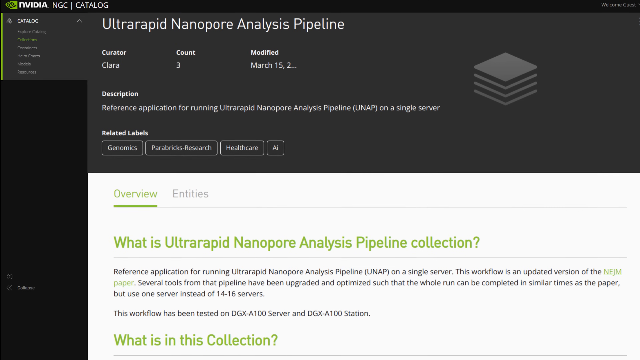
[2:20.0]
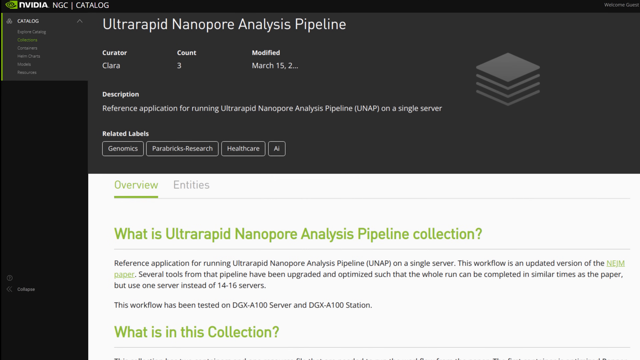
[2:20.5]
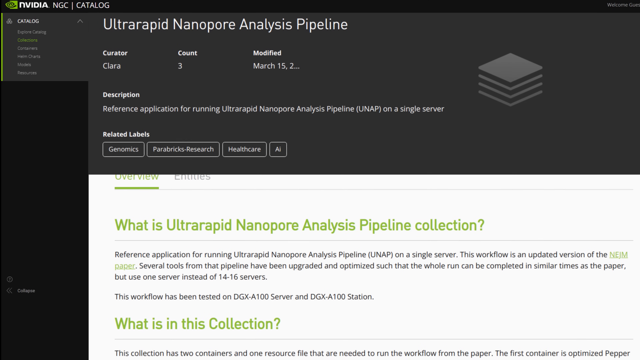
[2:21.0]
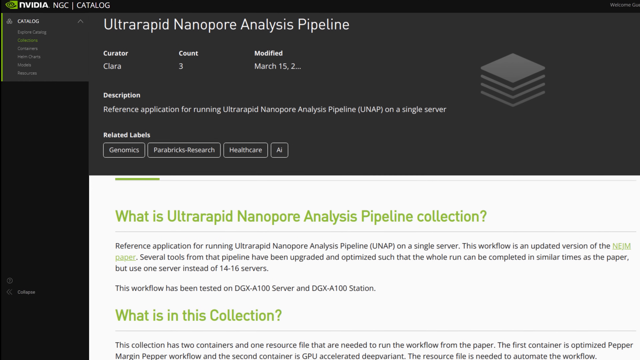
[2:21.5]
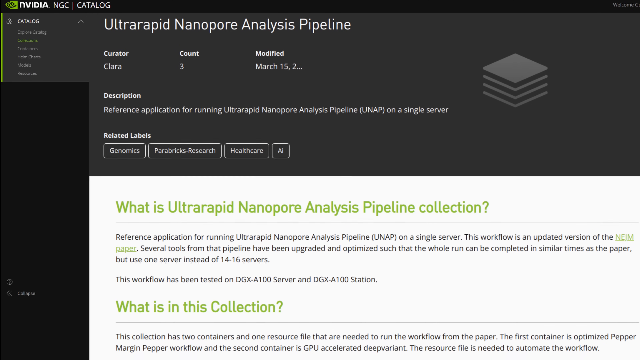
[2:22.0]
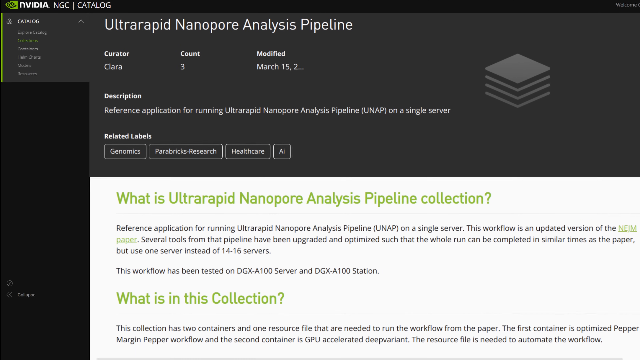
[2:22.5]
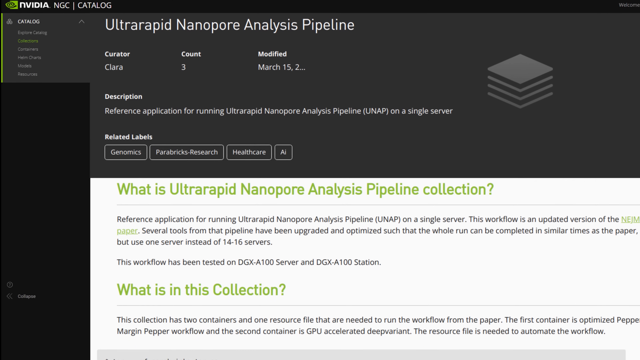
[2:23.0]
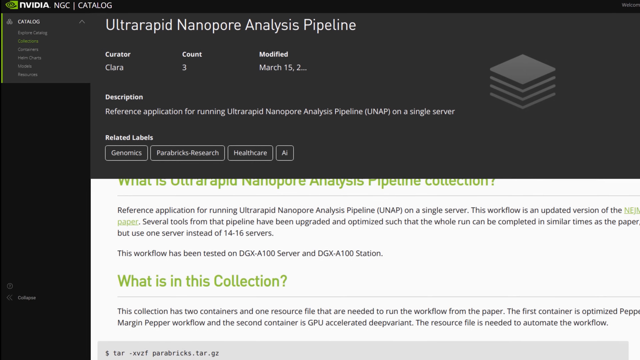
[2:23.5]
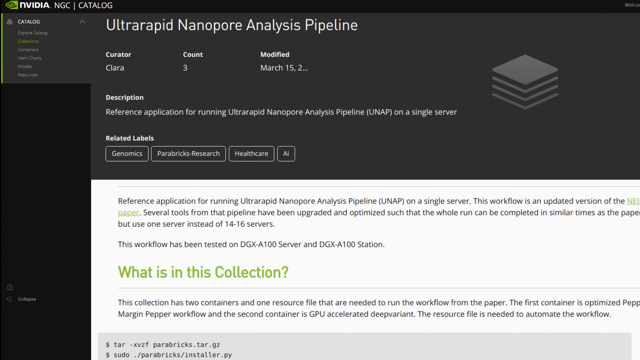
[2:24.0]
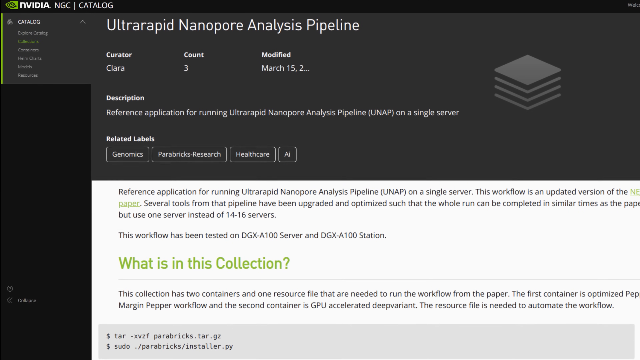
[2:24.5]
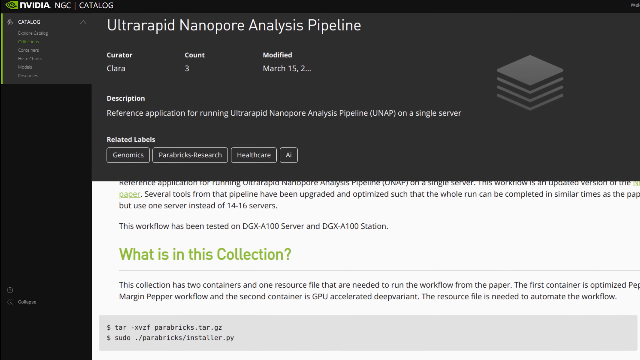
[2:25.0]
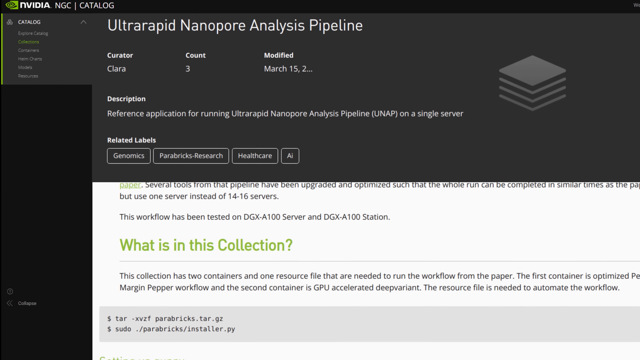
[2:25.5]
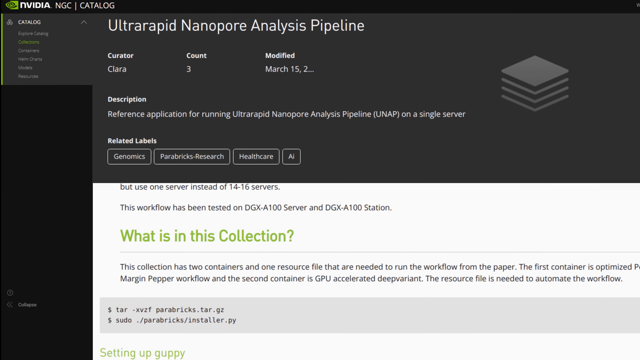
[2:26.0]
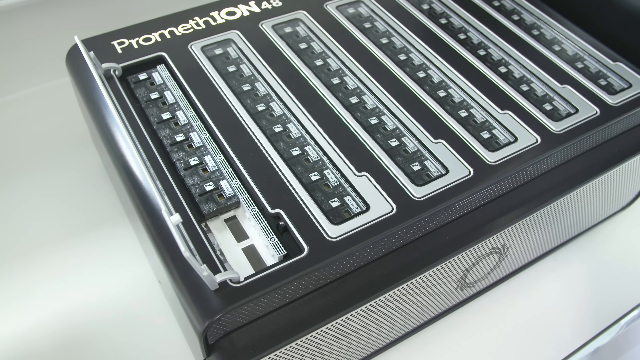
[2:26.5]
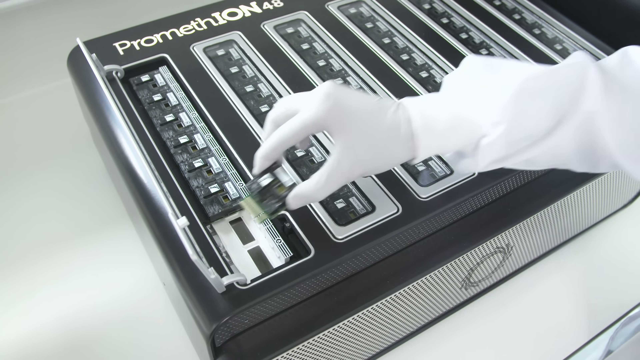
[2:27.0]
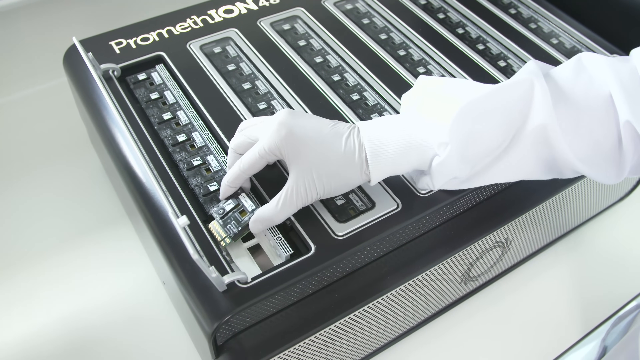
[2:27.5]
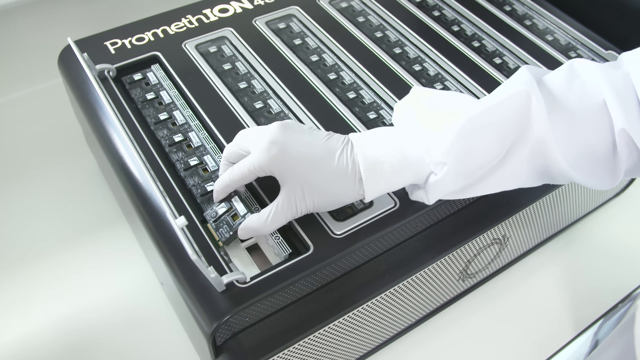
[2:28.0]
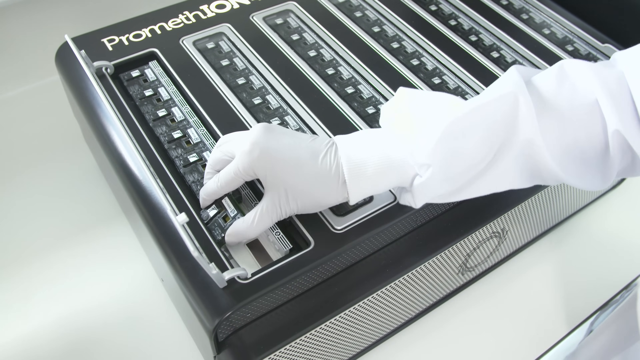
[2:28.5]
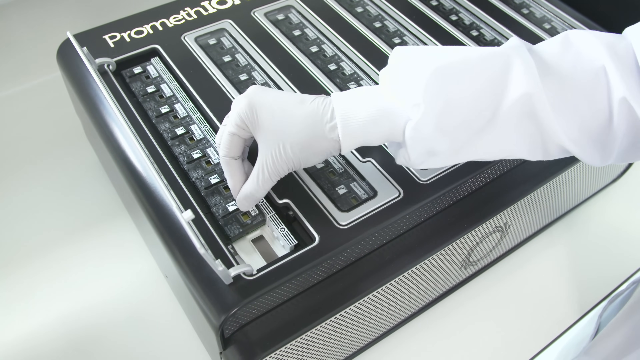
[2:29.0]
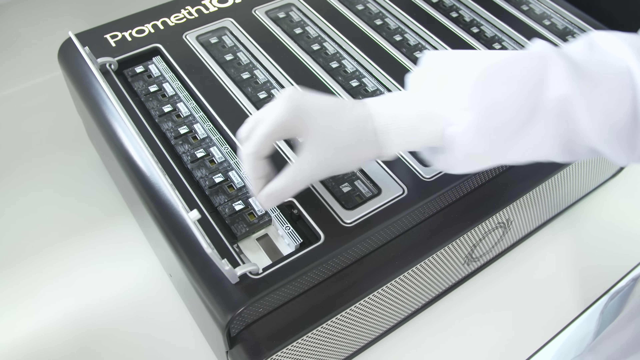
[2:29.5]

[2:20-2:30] A section reads "Ultra Rapid Nanopore Analysis Pipeline." Below that it reads "Curator Clara," "count 3," "modified March 15," and "Description, reference application for running Ultra Rapid Nanopore Analysis Pipeline (UNAP) on a single server." Related labels read "Genomics," "Parabricks Research" and "Healthcare AI." An overview section reads "This workflow is an updated version of the NEJM paper. Several tools from that pipeline have been upgraded and optimized such that the whole run can be completed in similar times as the paper, but use one server instead of 14 to 16 servers. This workflow has been tested on DGX-A100 server and DGX-A100 station." Under "What is in this collection?" it reads "This collection has two containers and one resource file," naming the first container "Optimized Margin Pepper Workflow" and the second "GPU Accelerated Deep Variant," and stating "The resource file is needed to automate the workflow."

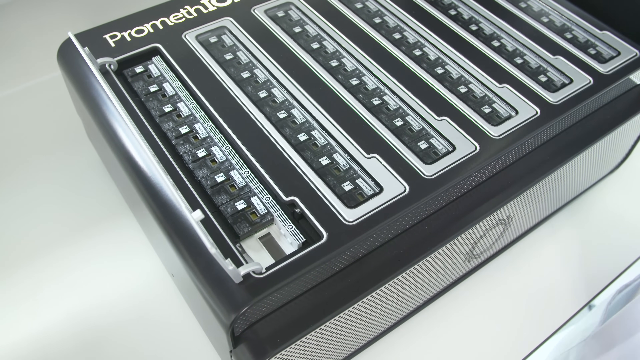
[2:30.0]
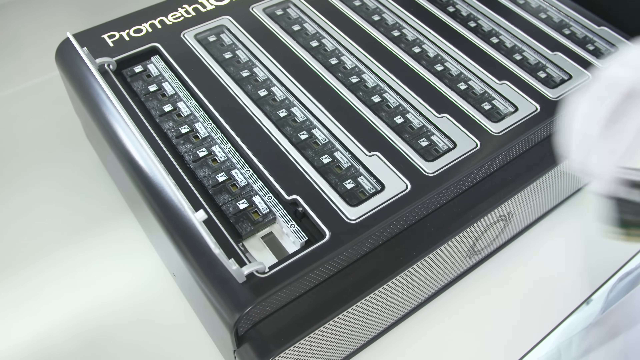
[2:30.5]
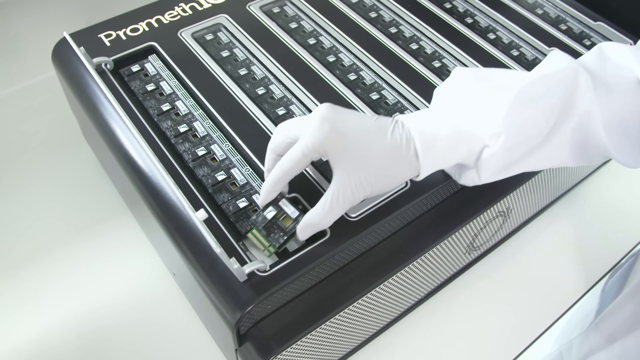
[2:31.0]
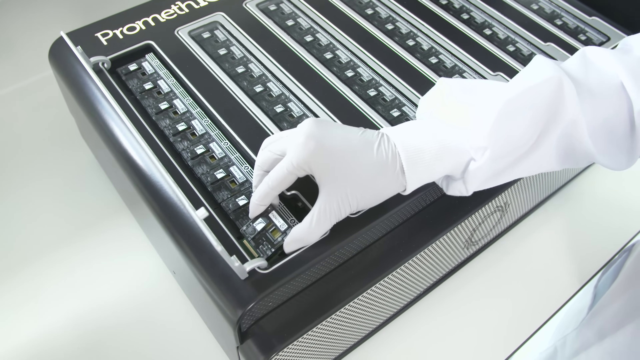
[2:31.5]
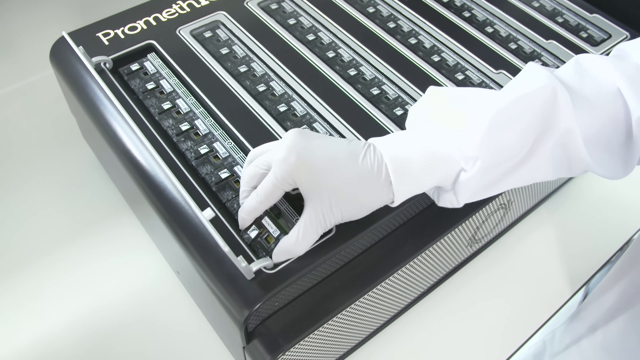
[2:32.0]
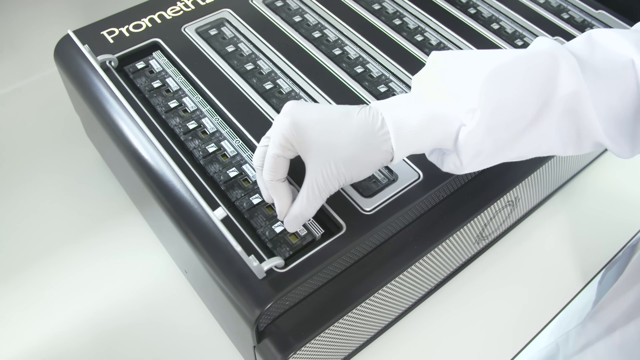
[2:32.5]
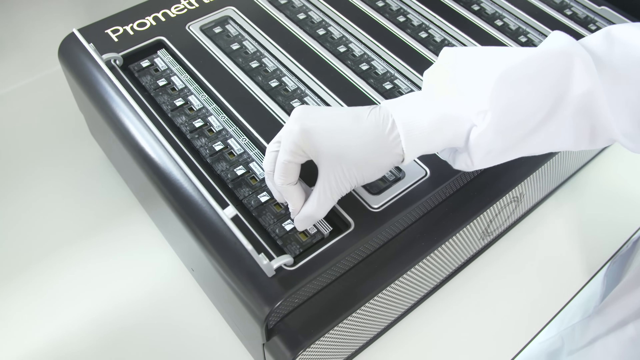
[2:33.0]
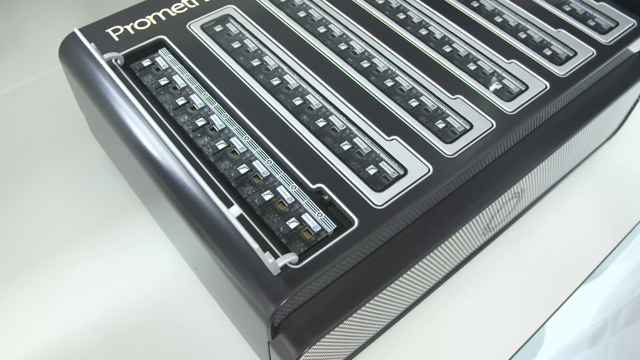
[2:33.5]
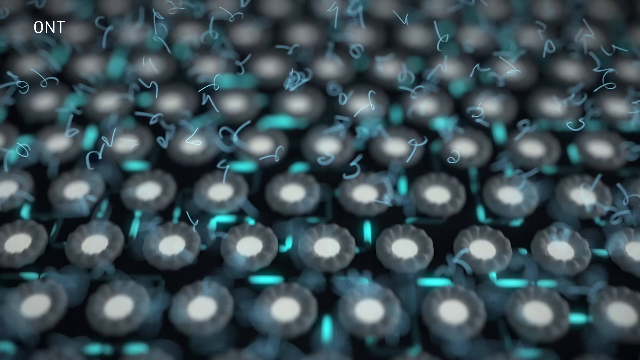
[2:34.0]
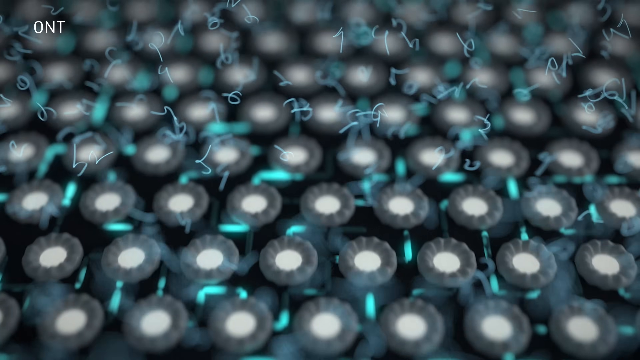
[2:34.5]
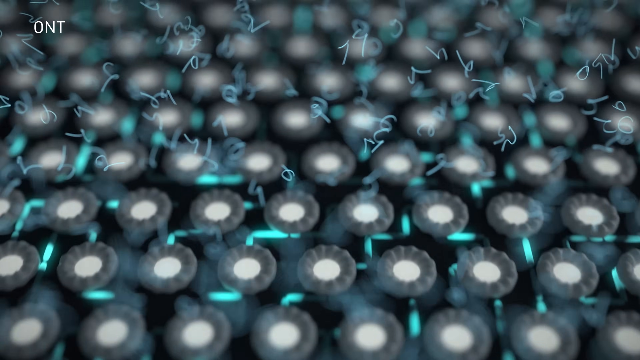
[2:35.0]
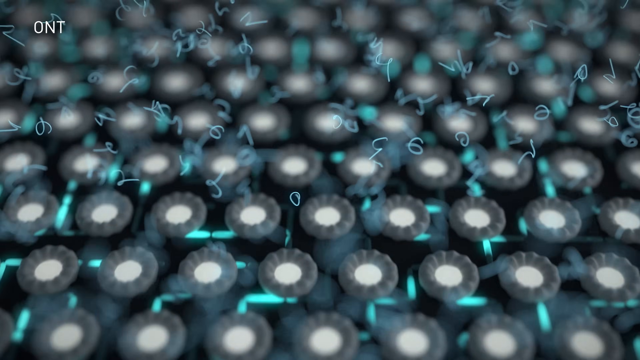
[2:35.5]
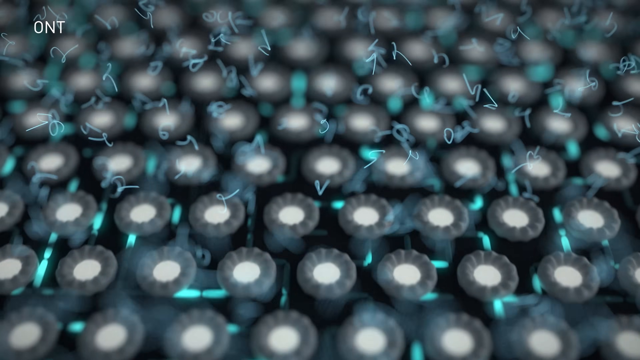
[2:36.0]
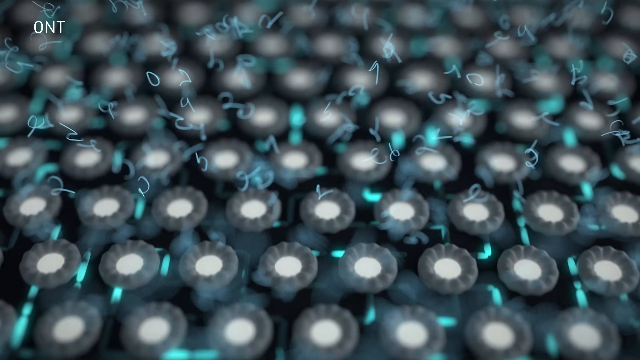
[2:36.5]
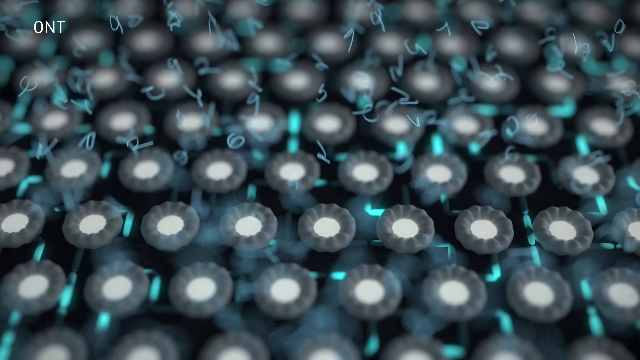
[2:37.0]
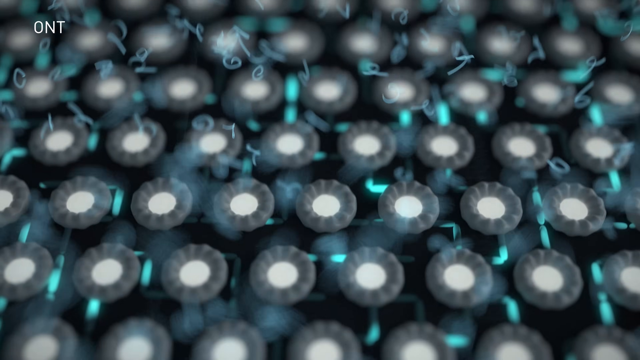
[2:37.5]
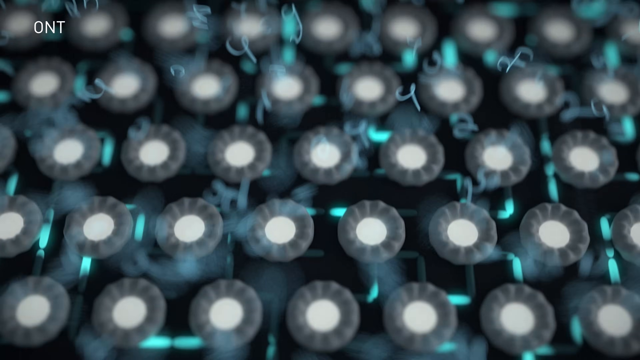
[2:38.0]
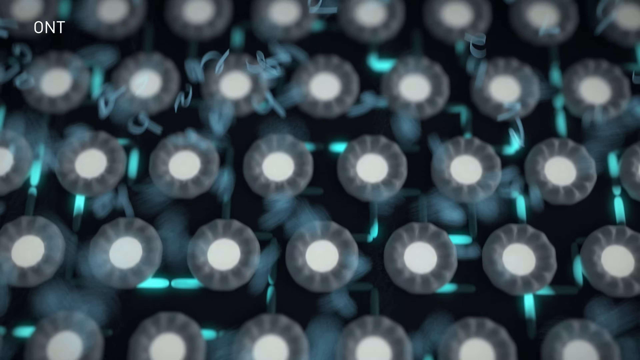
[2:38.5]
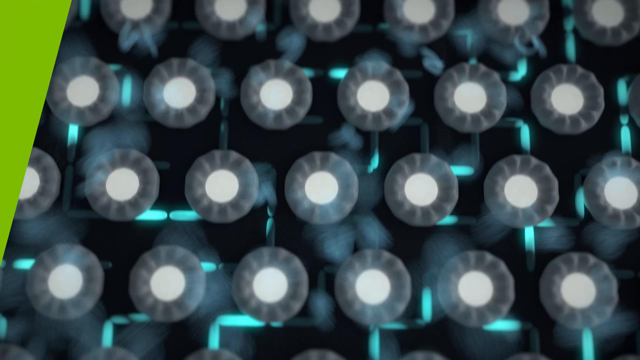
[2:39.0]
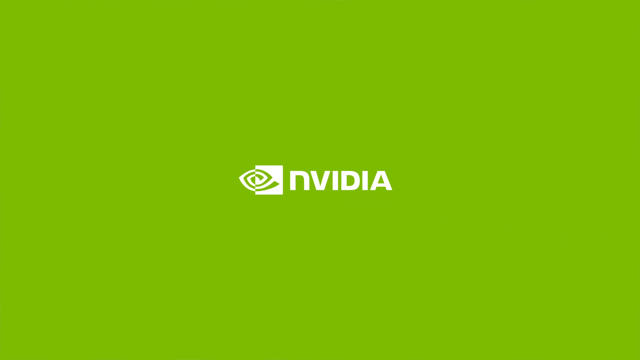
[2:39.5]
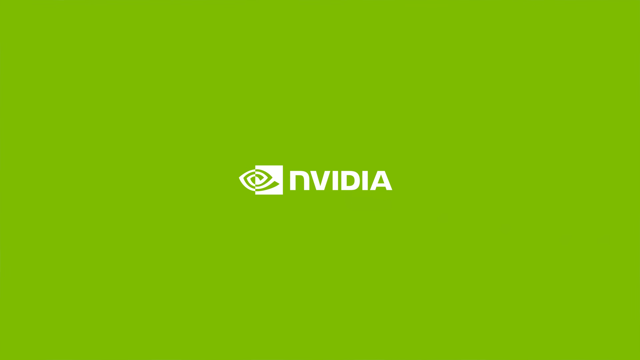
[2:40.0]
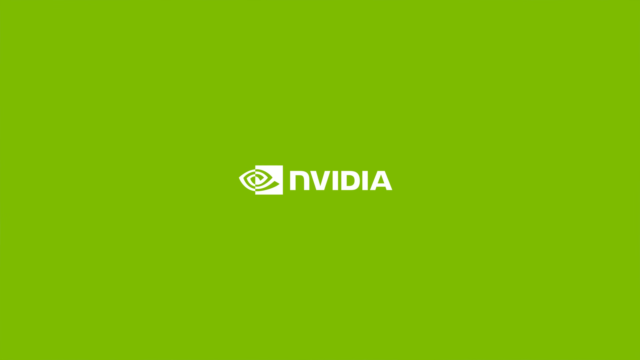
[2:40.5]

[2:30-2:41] Text reads "PromethIAN 48," and a number of microchips are inserted into what looks like a black computer tower. The chips are arranged eight per row in six rows, 48 in total. The bottom part has a silver grill and the hurricane logo, a black circular logo with little tendrils coming off of it, kind of like a hurricane. Then a number of little circular pads appear with various letters and numbers coming up from them. Finally, "NVIDIA" appears with the NVIDIA logo.